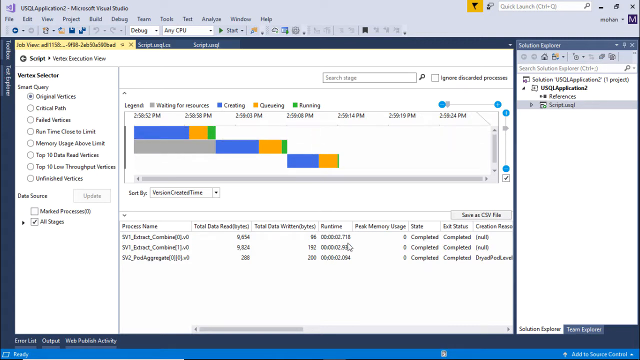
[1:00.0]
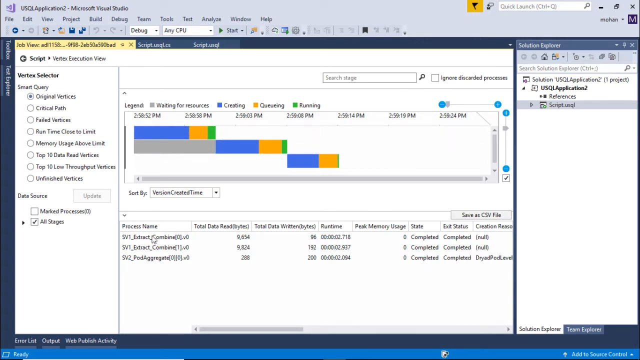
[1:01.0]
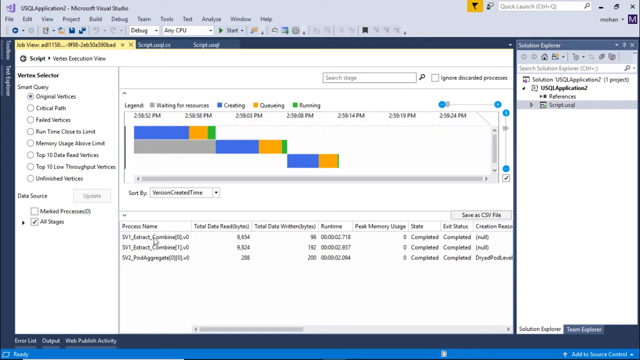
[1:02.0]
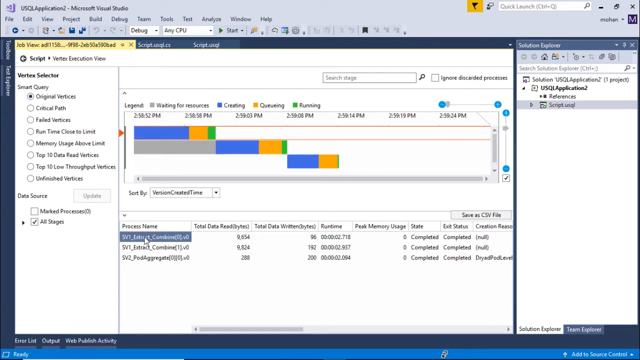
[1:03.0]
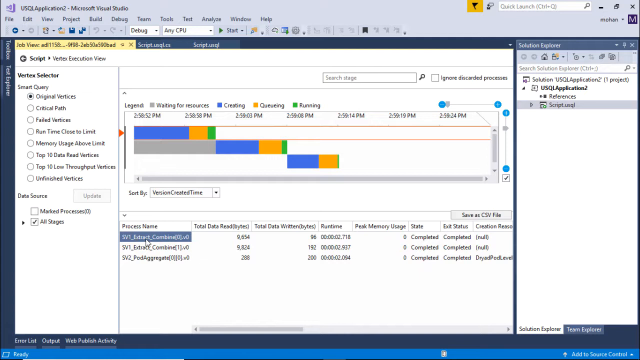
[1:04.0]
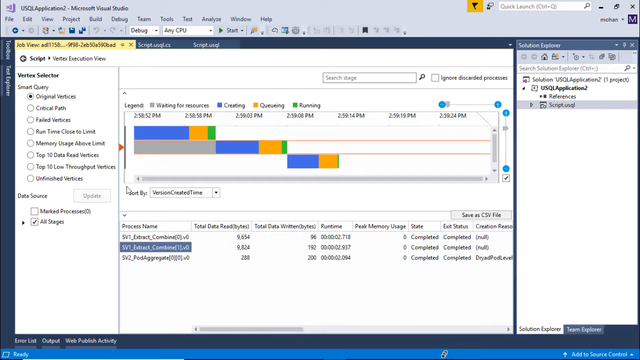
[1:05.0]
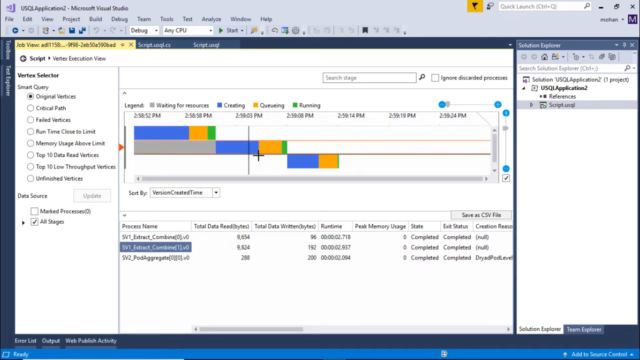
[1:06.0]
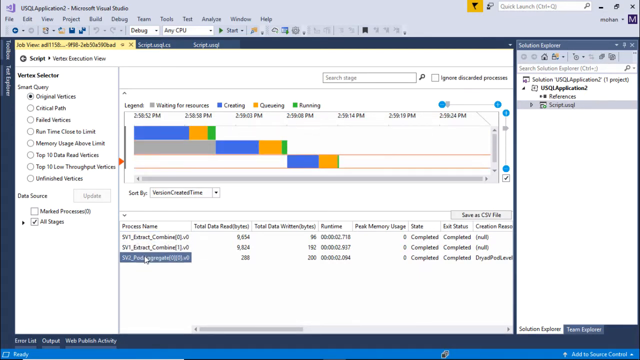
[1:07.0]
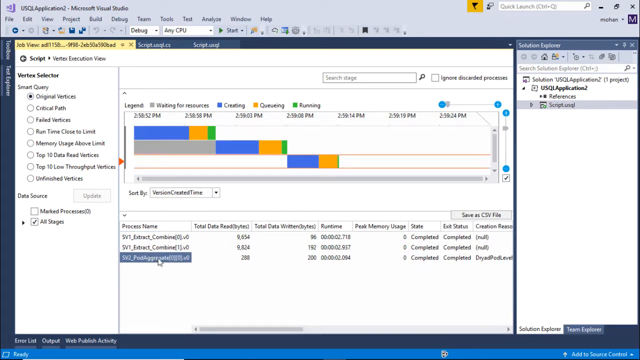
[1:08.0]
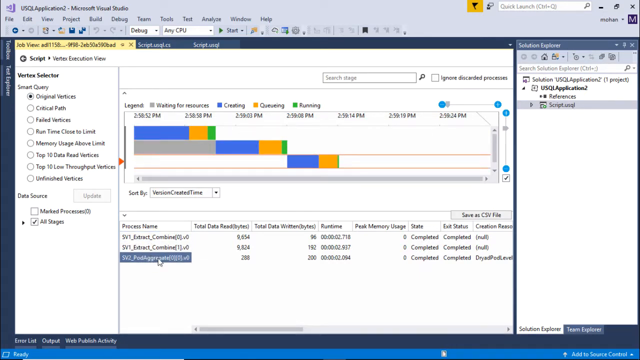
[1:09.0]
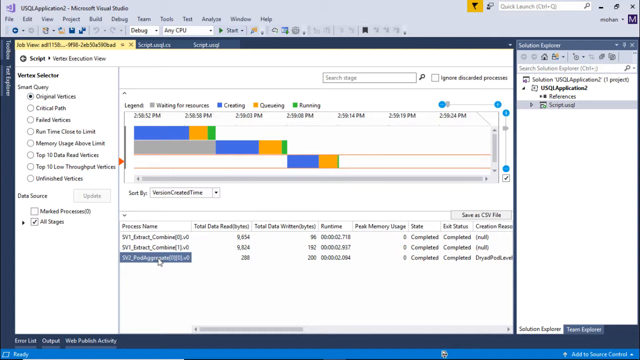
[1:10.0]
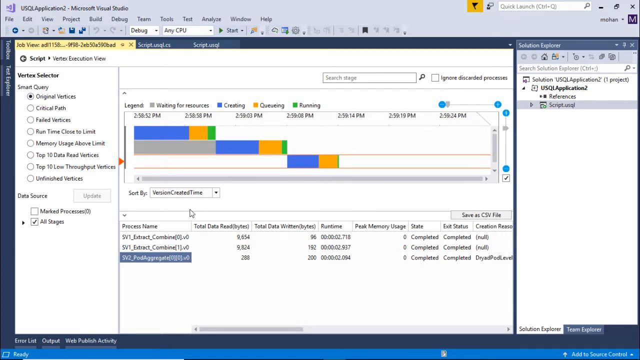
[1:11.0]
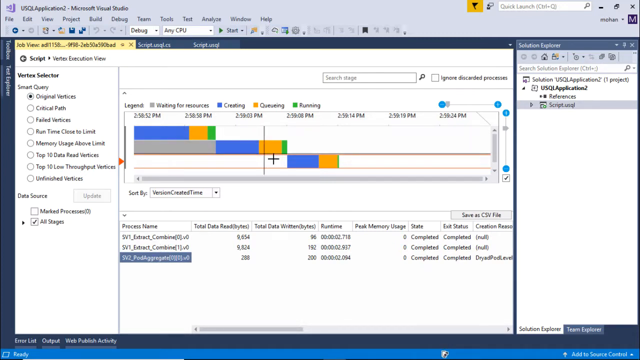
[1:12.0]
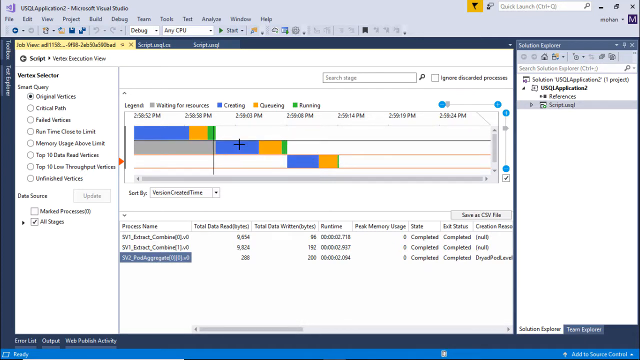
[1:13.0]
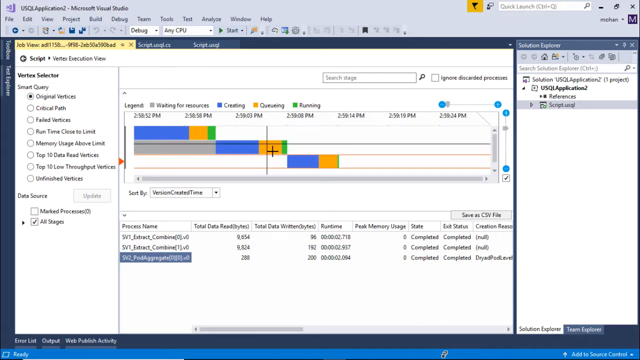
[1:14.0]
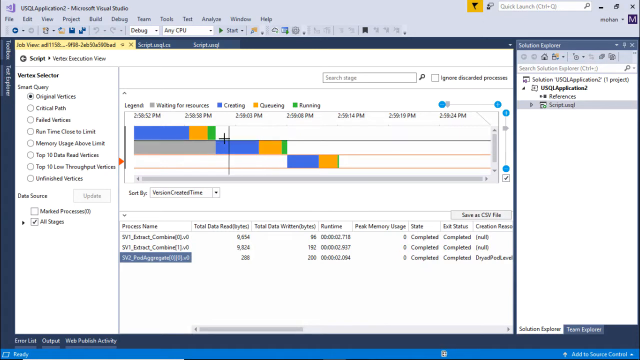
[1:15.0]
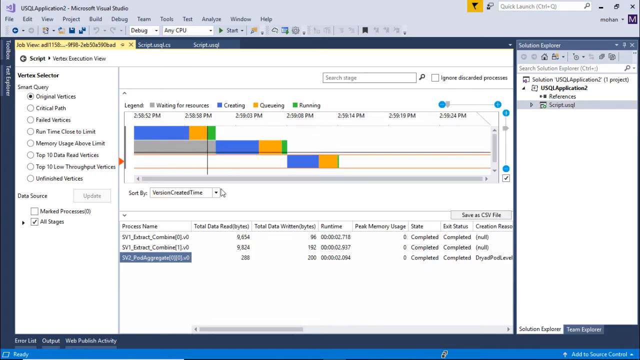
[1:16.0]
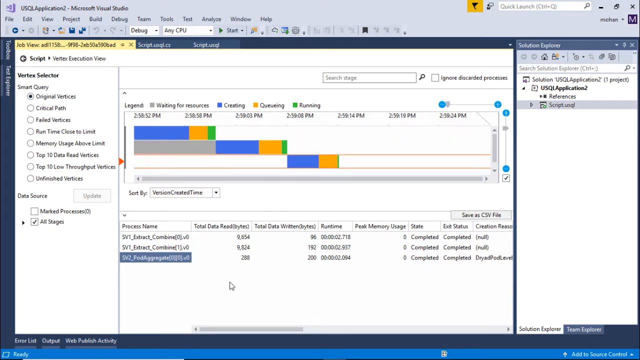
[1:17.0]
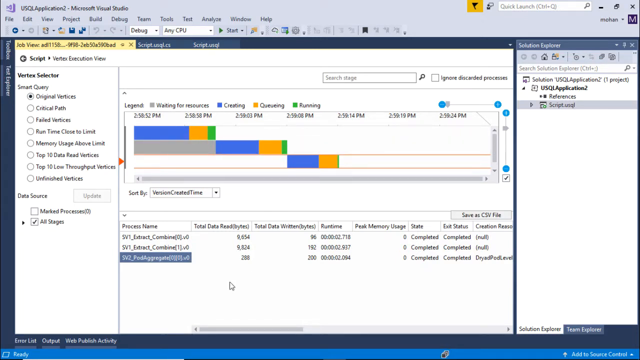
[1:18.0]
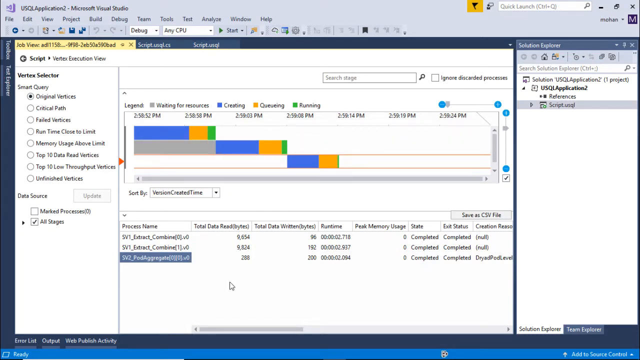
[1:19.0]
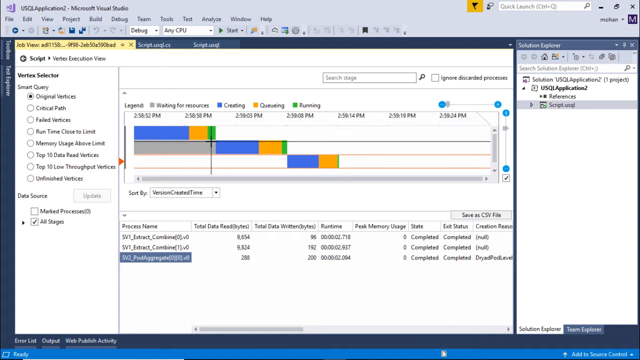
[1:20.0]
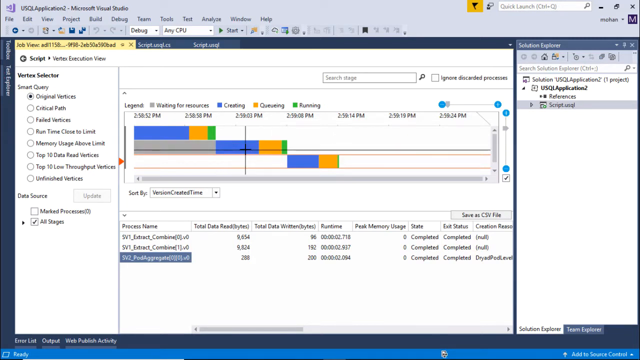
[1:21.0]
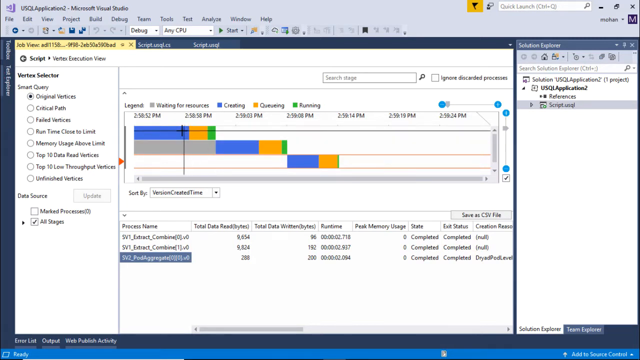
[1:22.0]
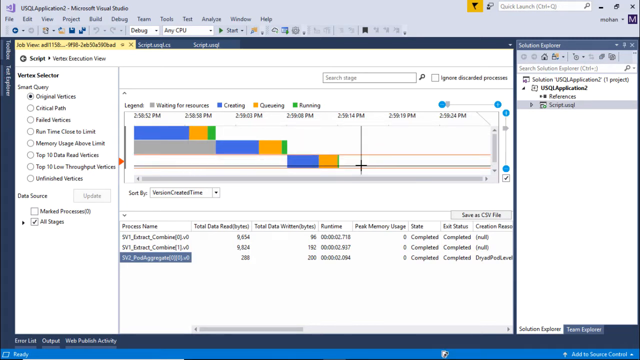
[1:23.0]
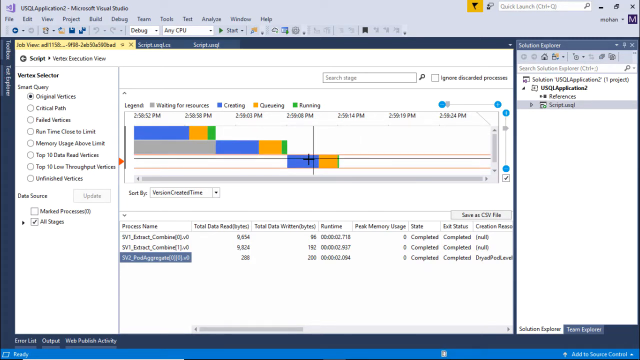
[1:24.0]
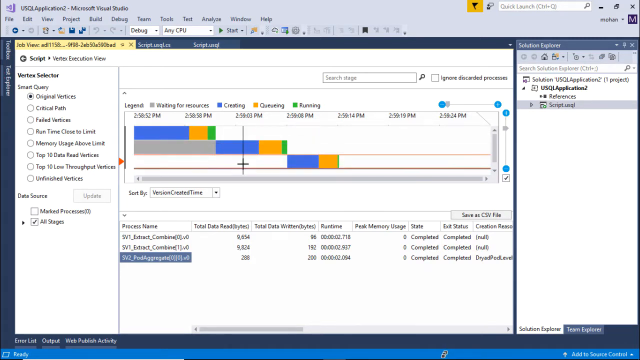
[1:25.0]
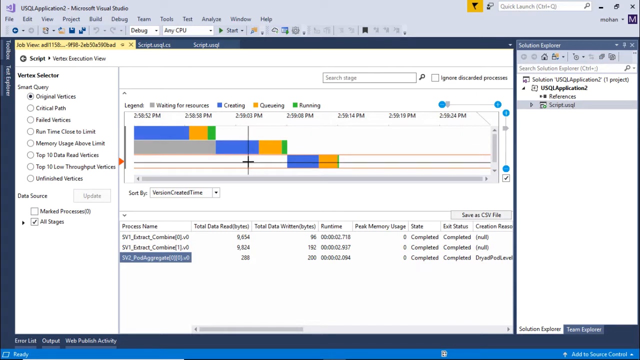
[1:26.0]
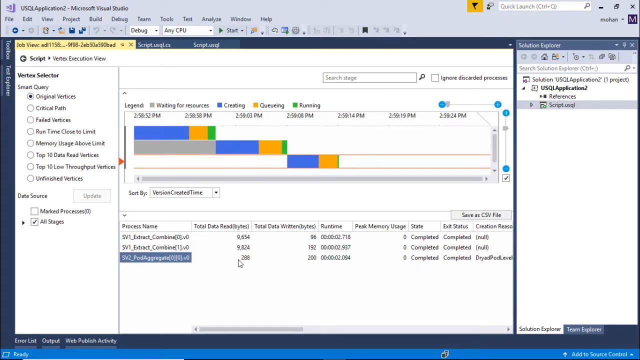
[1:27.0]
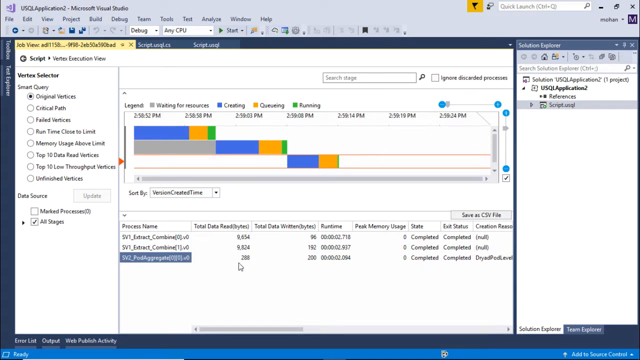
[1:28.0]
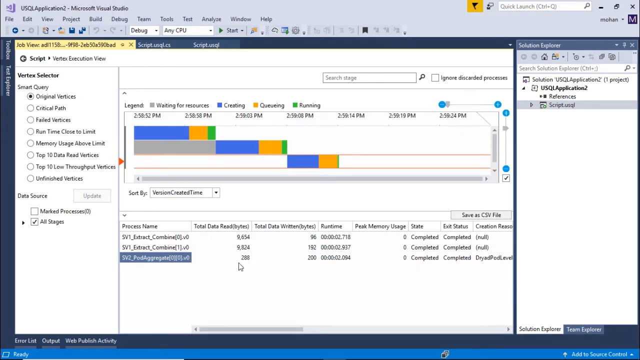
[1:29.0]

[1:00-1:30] A screenshot of a computer is on the screen, and a mouse scrolls. In the middle, upper half of the screen are color-coded charts in blue, yellow and green, with unreadable text below them. A pointer appears and points at the text below the chart, highlighting various text boxes there. The mouse moves back up to the chart, indicating that the words reflect part of the chart, then moves back down to the lower section, pointing out different areas of the text box, and then scrolls back up to the blue, yellow and green chart with its various extensions. The computer screen image is divided into four sections, including a left vertical rectangle with bubble selectors and indecipherable words, the center graph section, and a third rectangle with more indecipherable words.